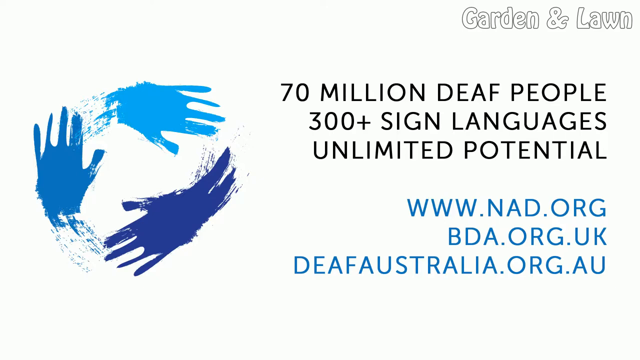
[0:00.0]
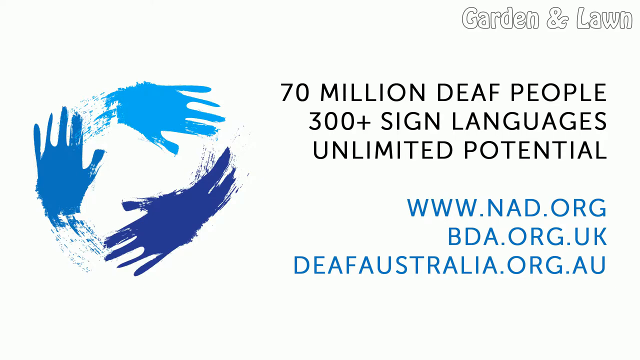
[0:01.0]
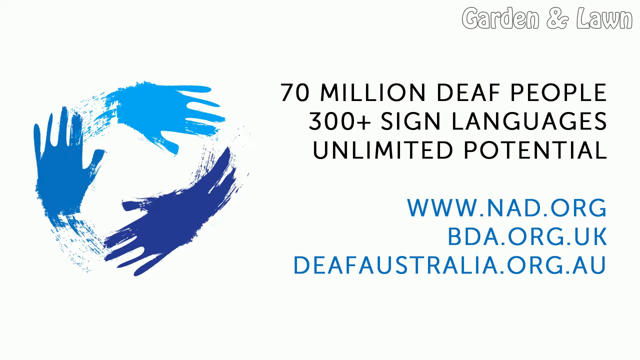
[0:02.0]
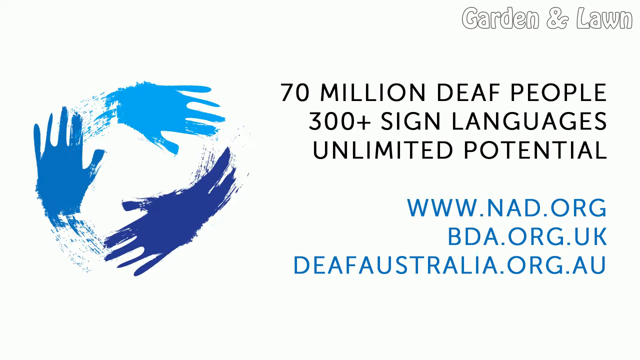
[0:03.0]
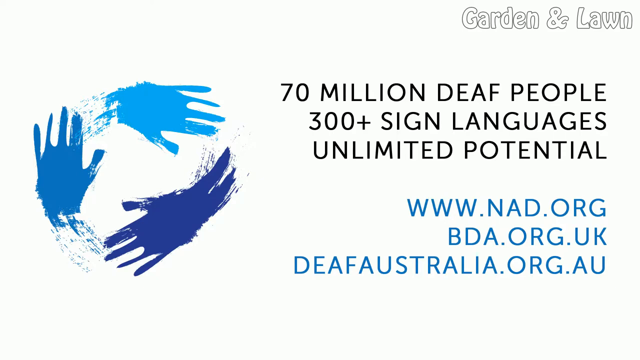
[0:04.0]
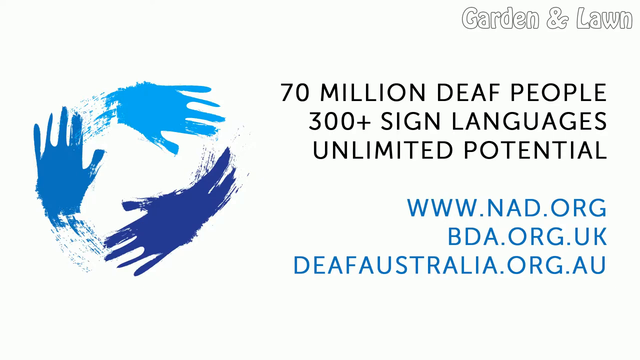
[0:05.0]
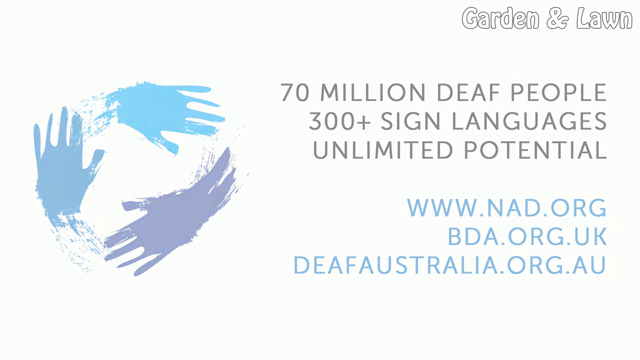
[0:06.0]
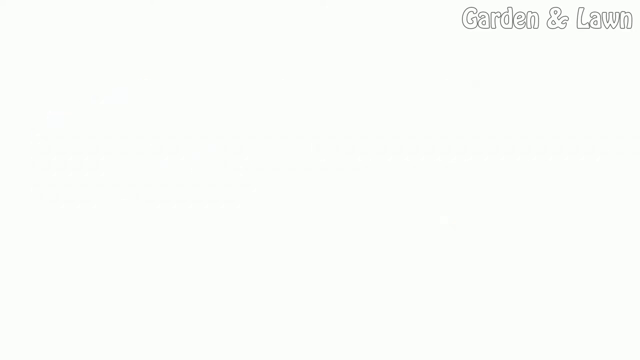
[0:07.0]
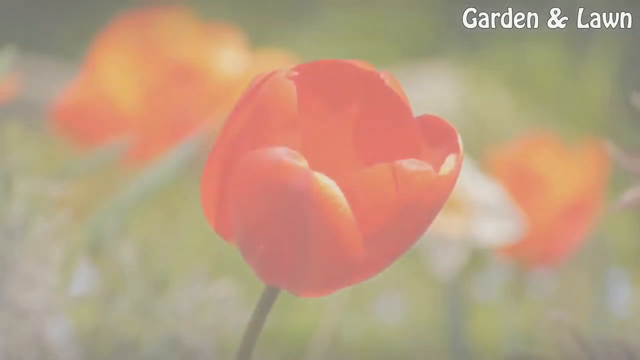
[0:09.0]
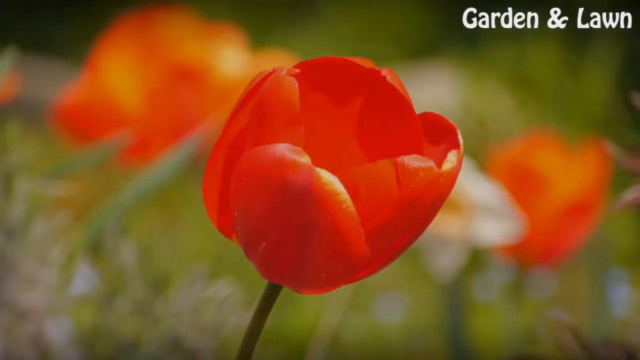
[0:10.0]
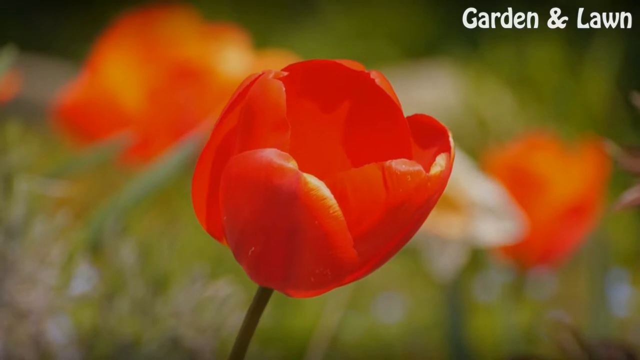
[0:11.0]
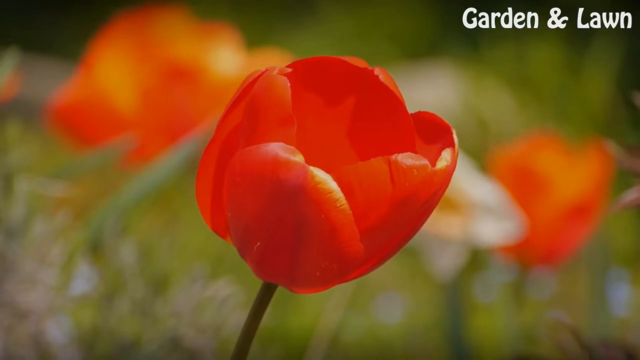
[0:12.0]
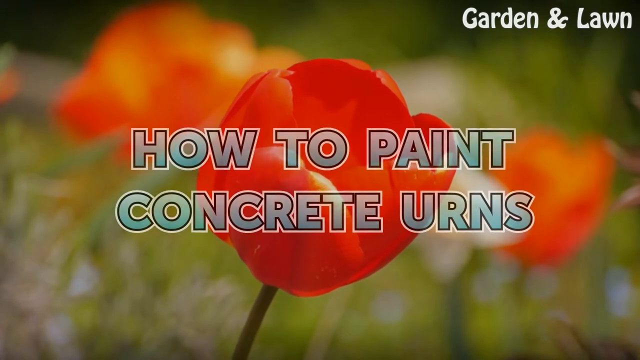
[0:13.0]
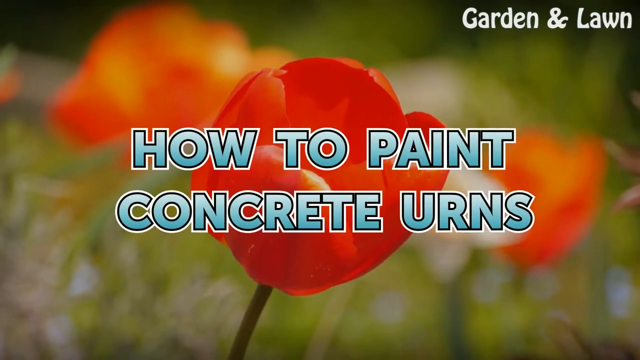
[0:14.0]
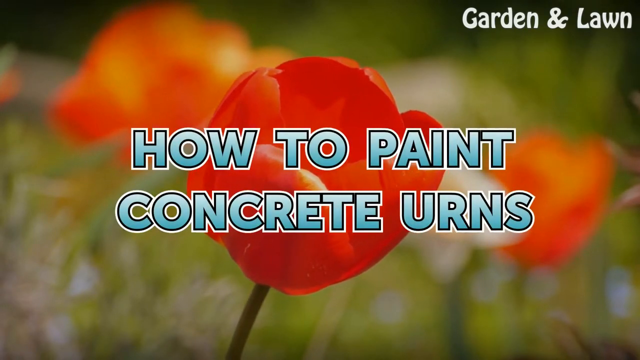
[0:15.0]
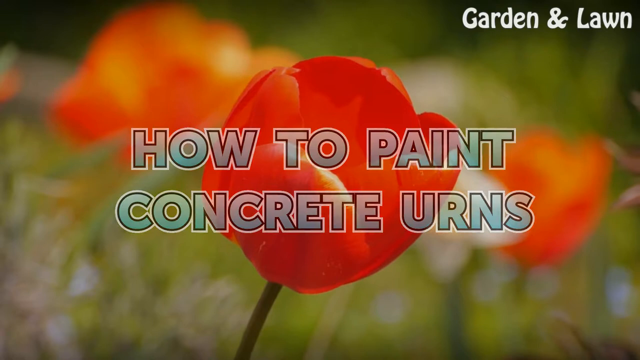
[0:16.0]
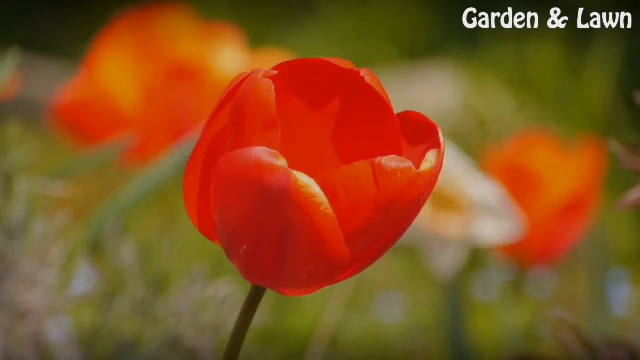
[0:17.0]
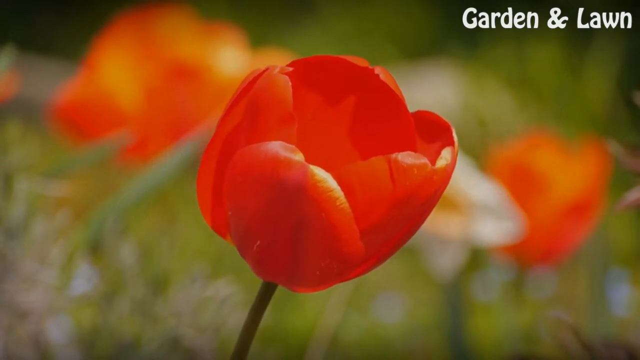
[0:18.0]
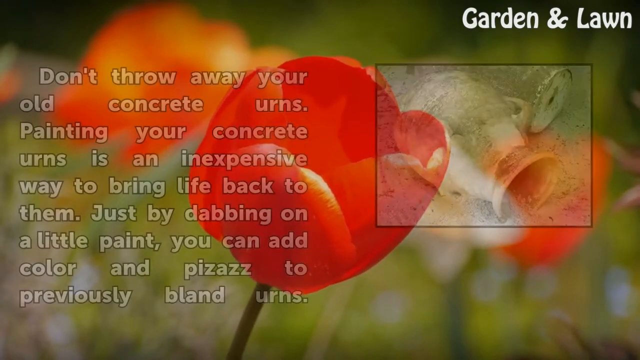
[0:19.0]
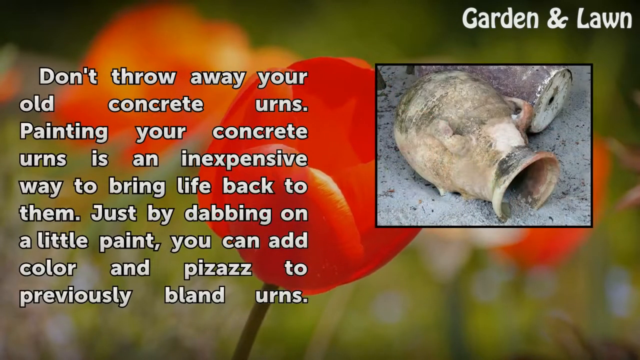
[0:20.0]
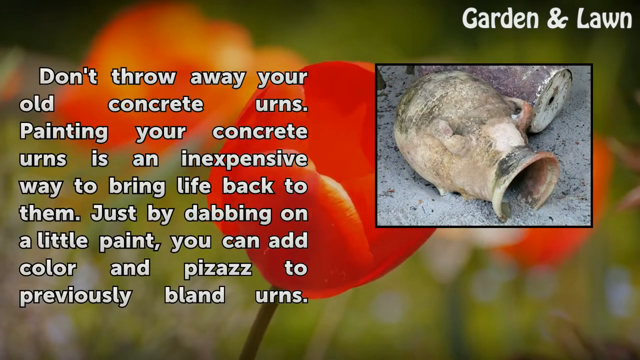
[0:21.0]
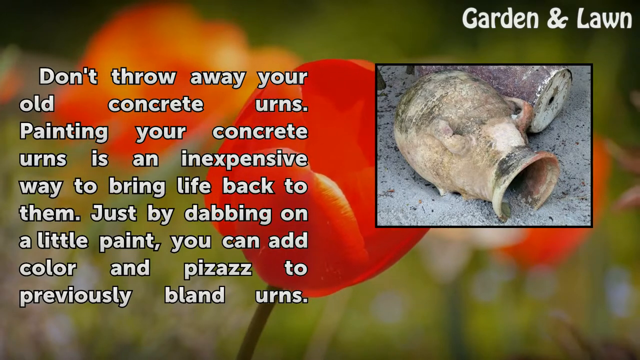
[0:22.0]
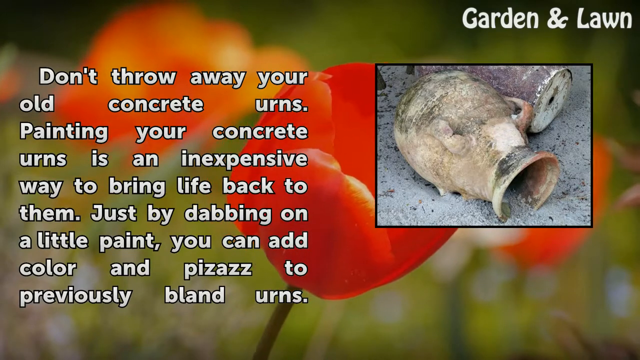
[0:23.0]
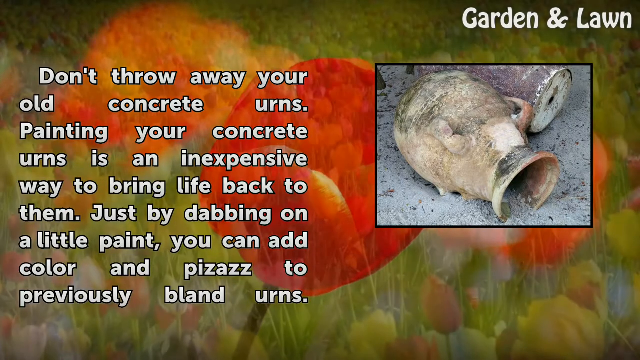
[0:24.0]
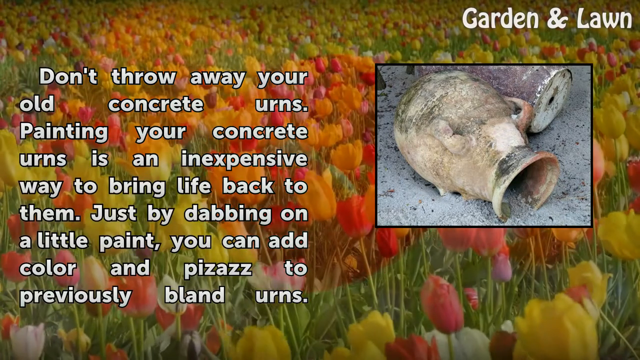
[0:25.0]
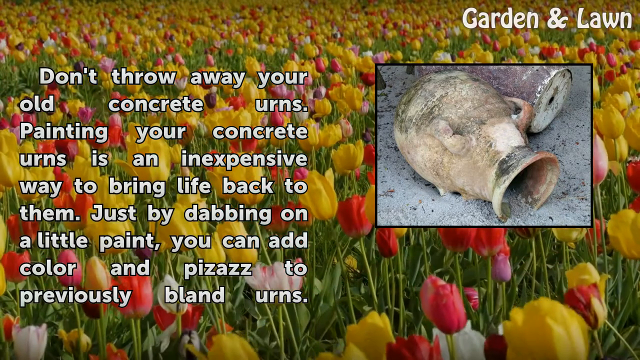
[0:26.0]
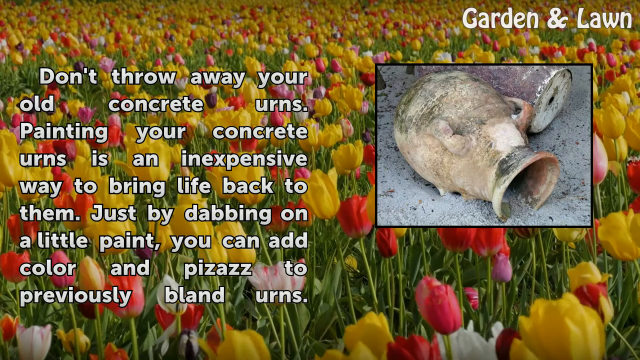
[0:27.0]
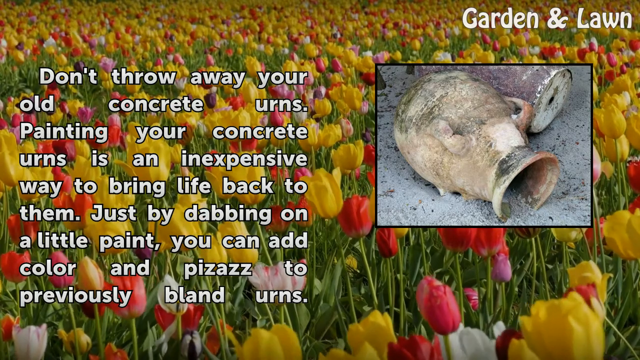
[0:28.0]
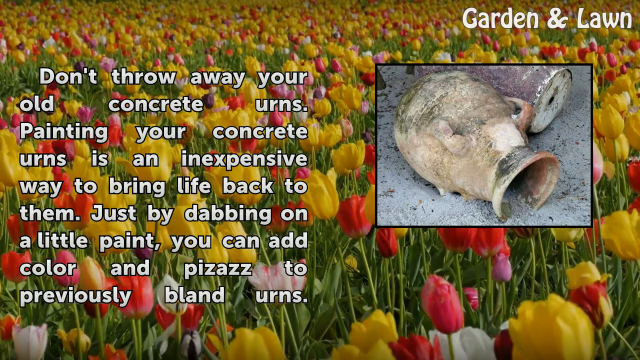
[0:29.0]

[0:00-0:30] On the left side of the frame, about three paintbrush-style hands form a circle, taking up basically that whole side. They are in about three different shades of blue: a dark navy blue, a medium blue, and a light blue. On the right side, a title introduces the topic: "70 million deaf people 300 plus sign languages unlimited potential," followed by three different organizations that they service. The video then slowly transitions to a close-up of a tulip with a blurred background, and the title "how to paint concrete urns" pops up. Next, text on the left side reads: "don't throw away your old concrete urns. Painting your concrete urns is an inexpensive way to bring life back to them. Just by dabbing on a little paint you can add color and pizzazz to previous bland urns." An image in a small, thin black frame shows an old, rusty urn on the ground, spilling out some substance. Footage of a field of tulips is also shown.